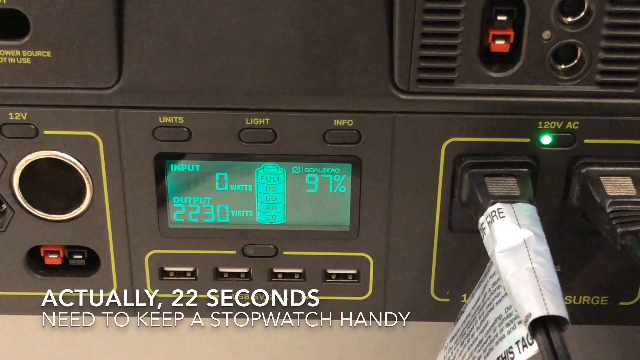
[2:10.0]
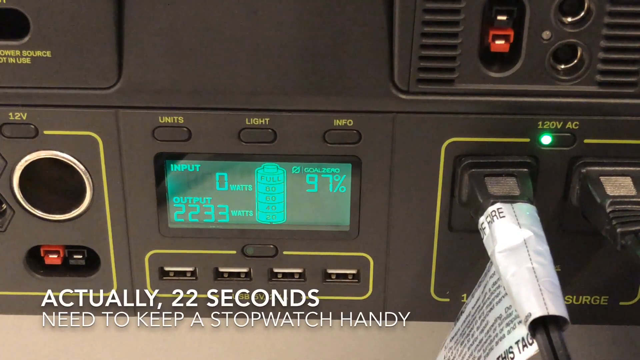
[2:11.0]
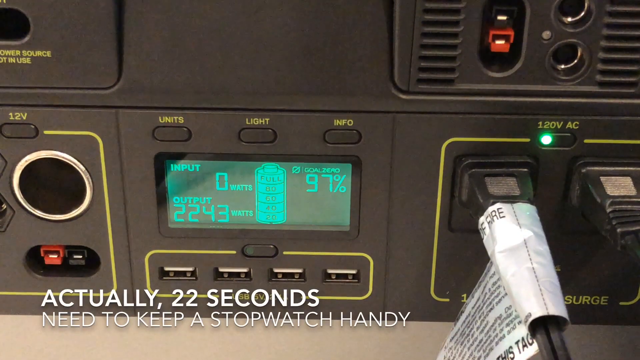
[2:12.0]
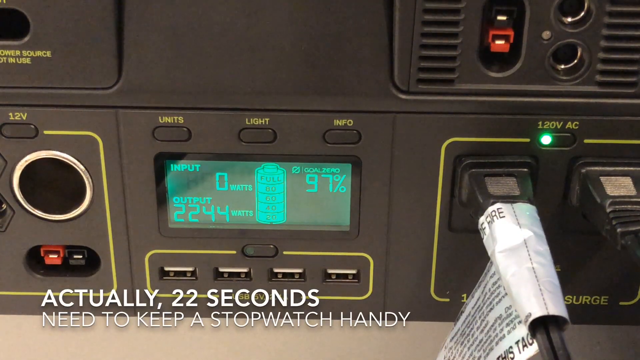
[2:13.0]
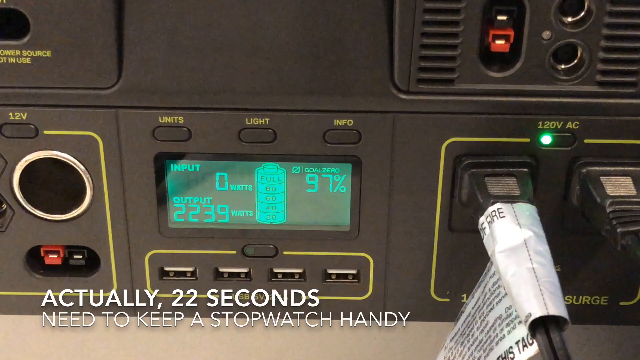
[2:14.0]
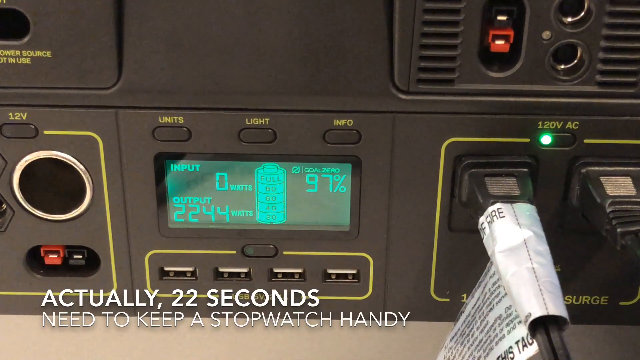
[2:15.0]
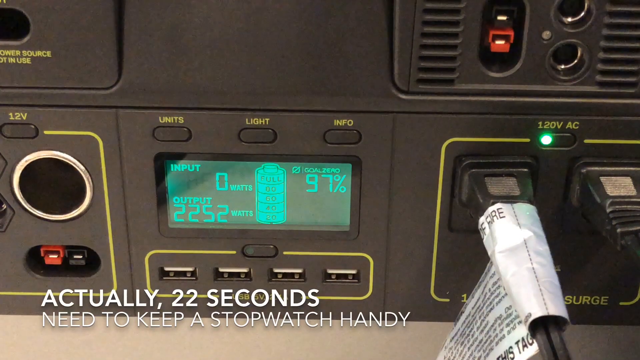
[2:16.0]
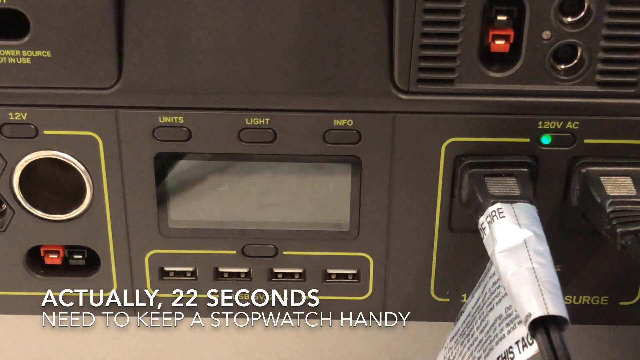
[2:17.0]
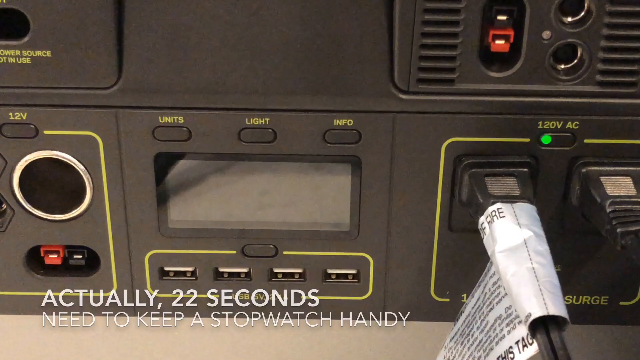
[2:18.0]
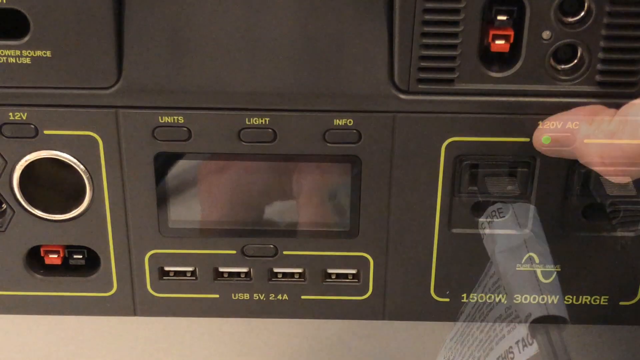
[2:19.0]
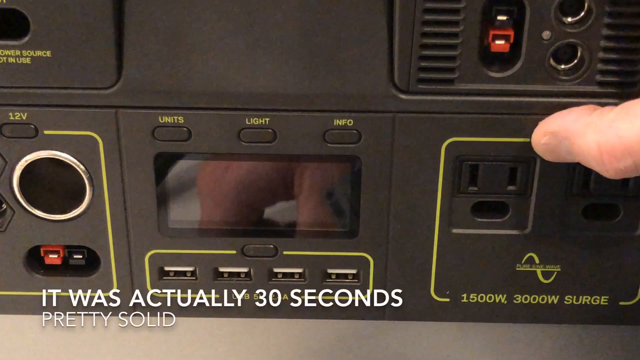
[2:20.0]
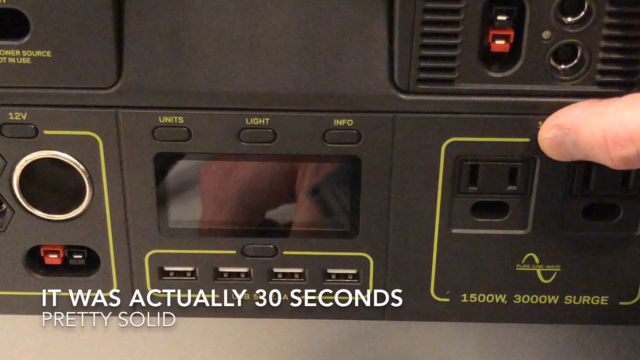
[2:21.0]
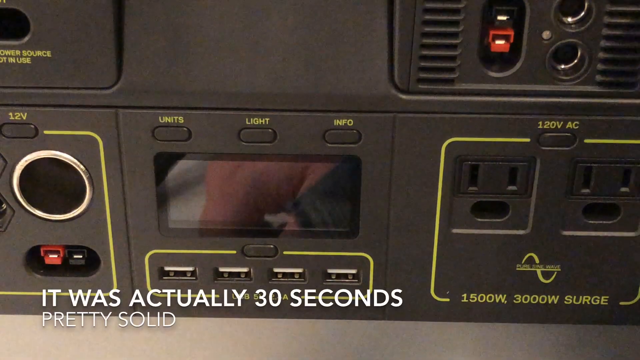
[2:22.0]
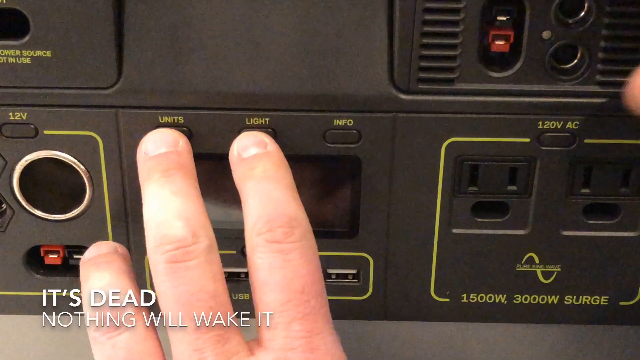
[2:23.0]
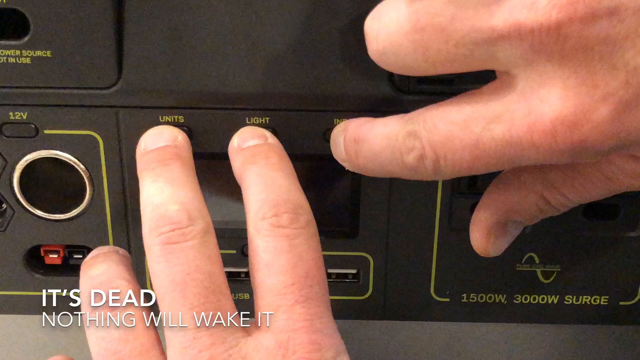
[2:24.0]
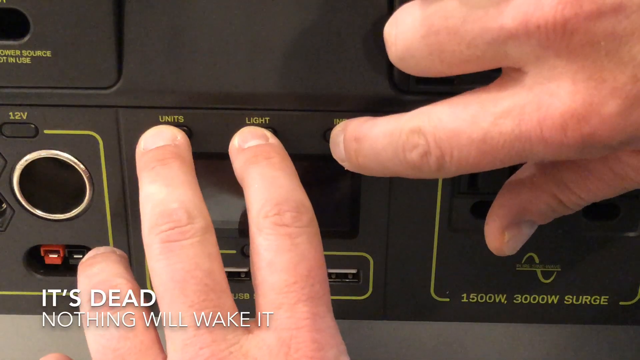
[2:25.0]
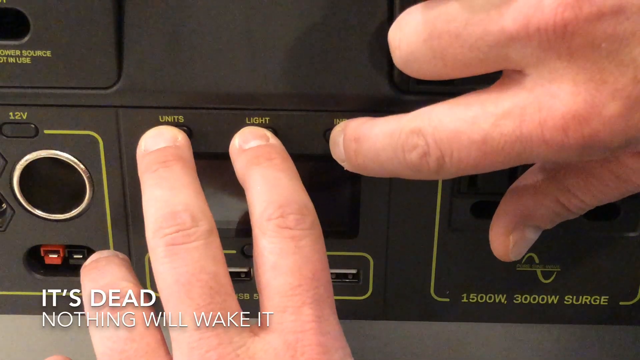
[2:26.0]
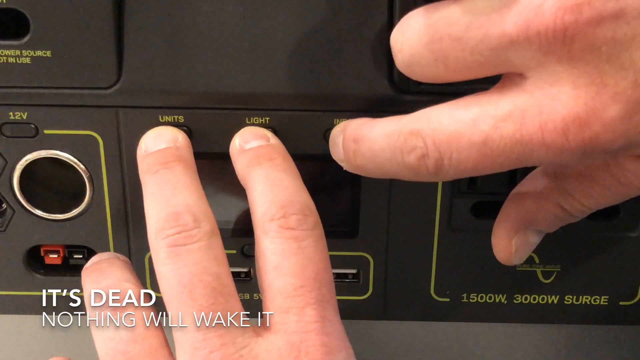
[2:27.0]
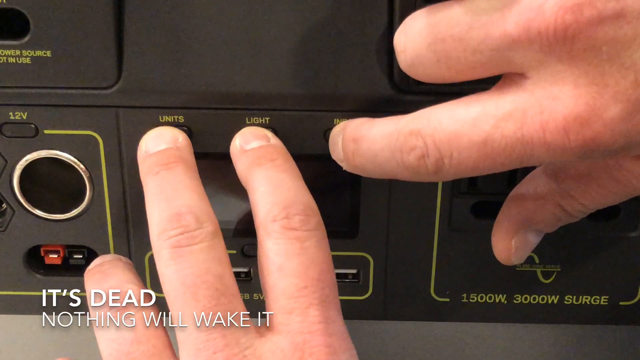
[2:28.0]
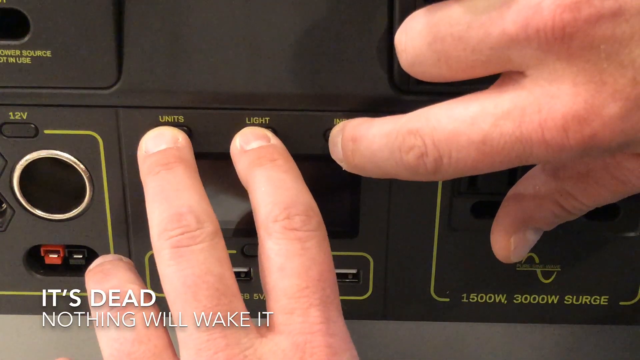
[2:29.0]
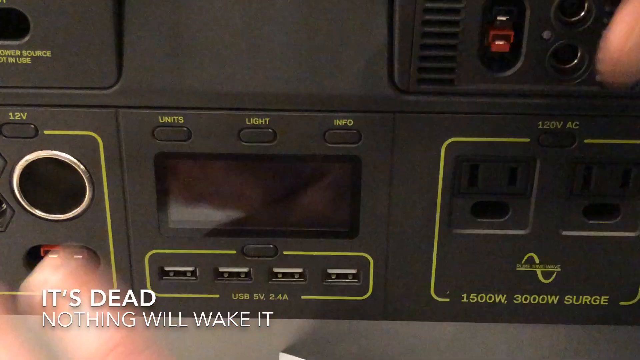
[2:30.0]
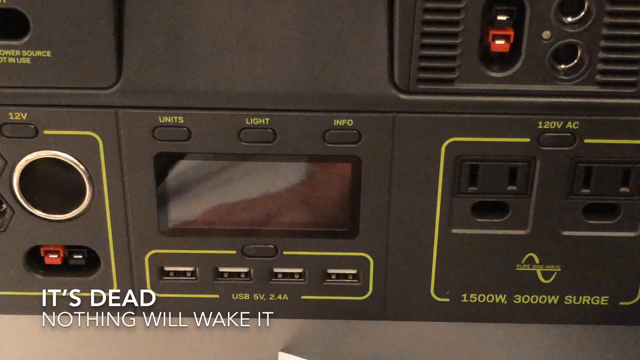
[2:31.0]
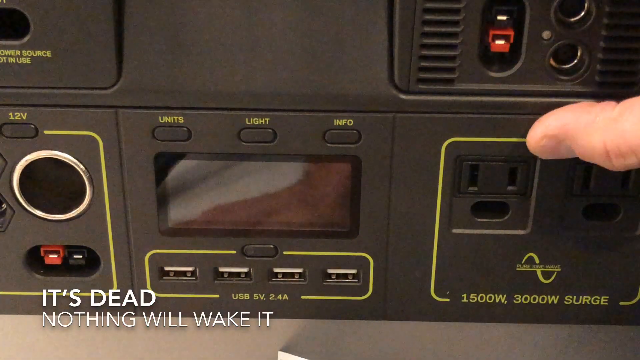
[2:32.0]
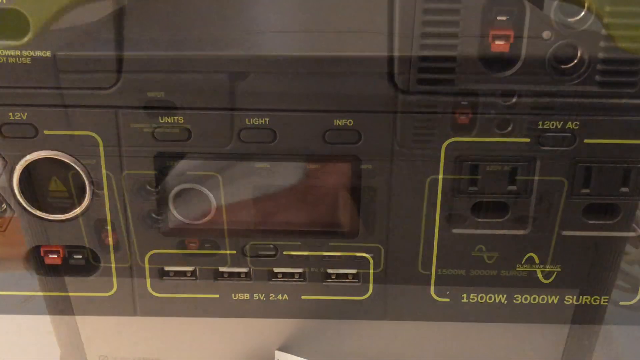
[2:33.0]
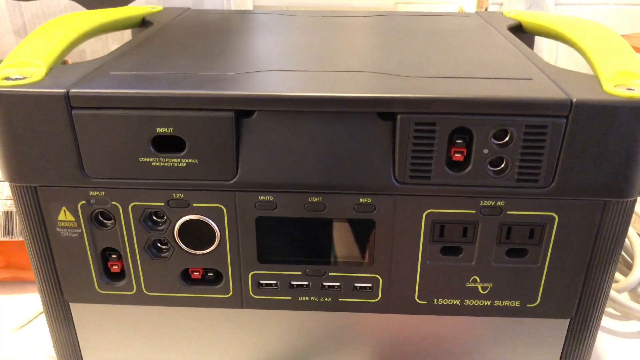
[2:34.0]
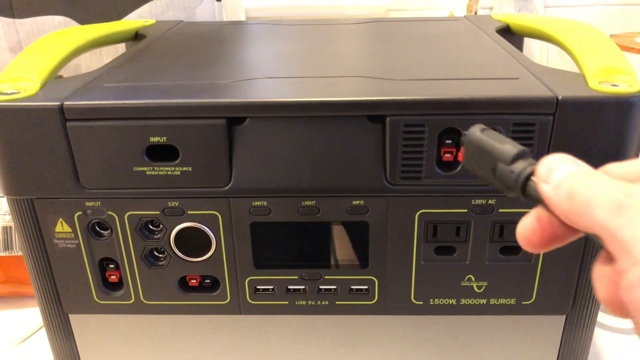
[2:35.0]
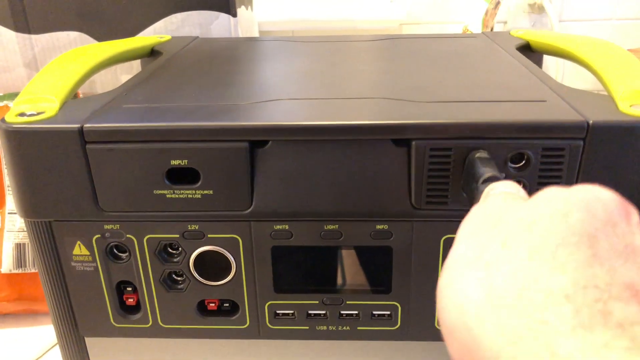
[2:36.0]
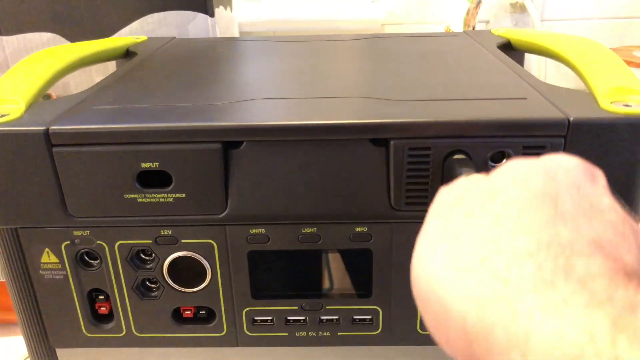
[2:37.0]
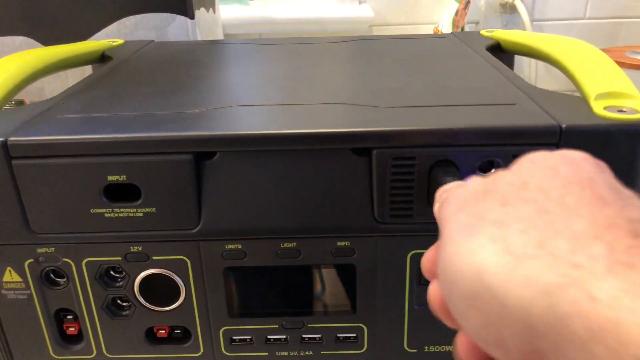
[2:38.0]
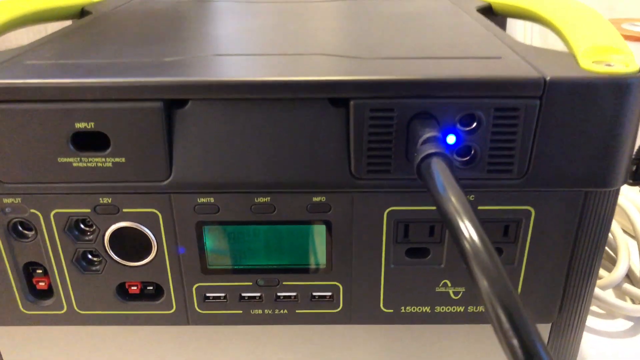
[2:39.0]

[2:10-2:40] Text reads "actually 22 seconds need to keep a stopwatch". The screen, illuminated in green, goes off, and then reads "actually 30 seconds" and "it's dead, nothing will wake it". Two hands come in: the left hand turns on the units and the light, and the right hand pushes the info button. The person's right hand takes a cord and puts it into a plug on the upper portion of the receiver, covering a red port. Underneath, two plugs are still plugged in under the 120 volt AC sign, and the green light is no longer illuminated because the machine lost power. The person uses their right hand to try to illuminate the 120 volt light again, and when they plug something into the upper portion, a blue light indicates power.